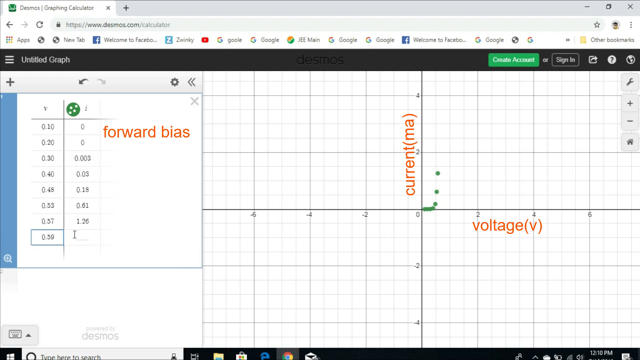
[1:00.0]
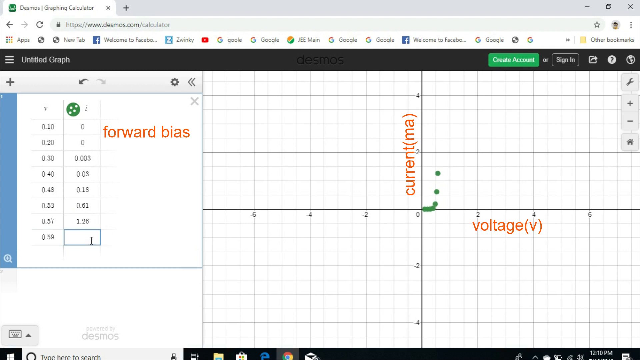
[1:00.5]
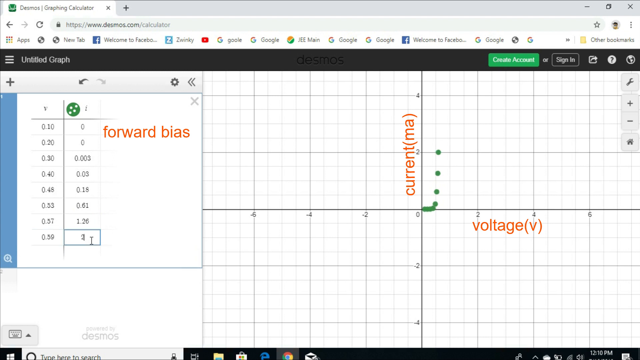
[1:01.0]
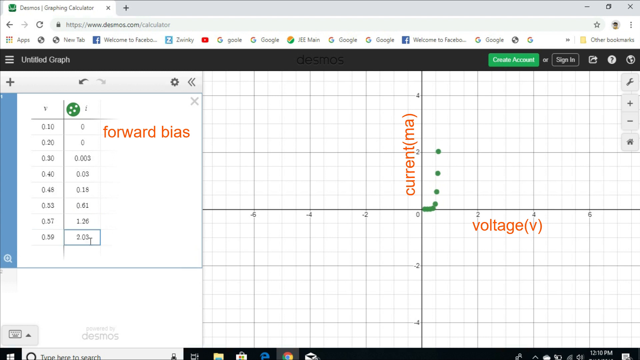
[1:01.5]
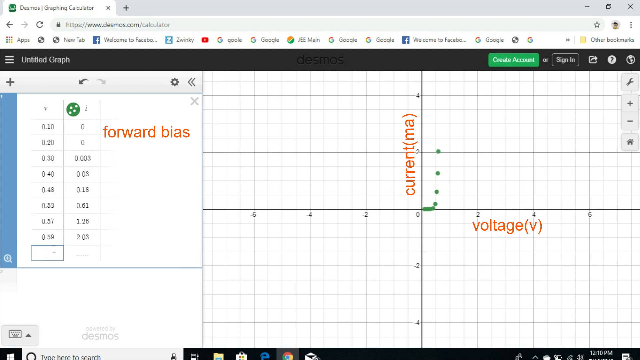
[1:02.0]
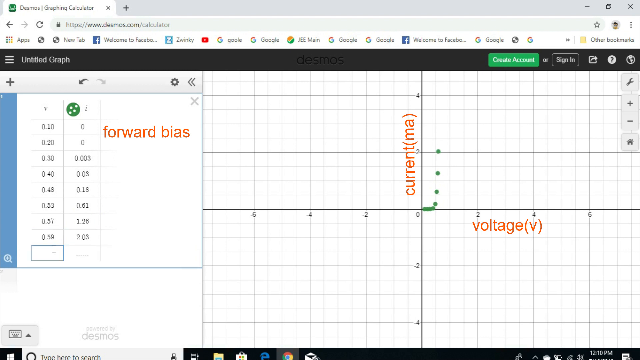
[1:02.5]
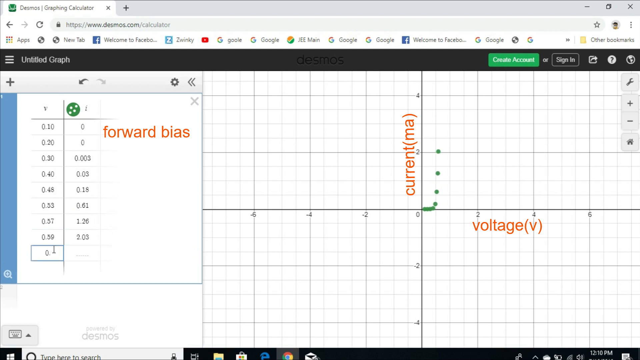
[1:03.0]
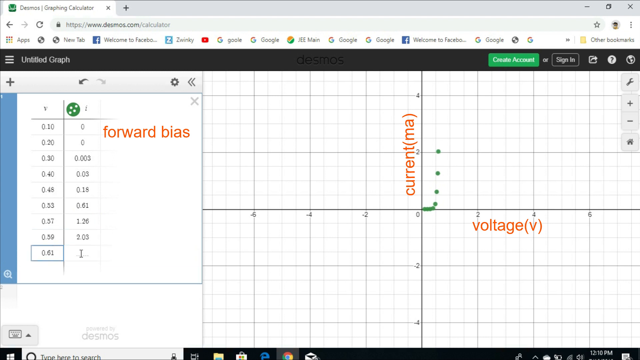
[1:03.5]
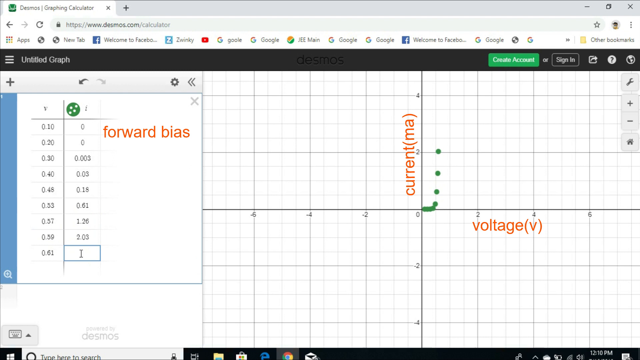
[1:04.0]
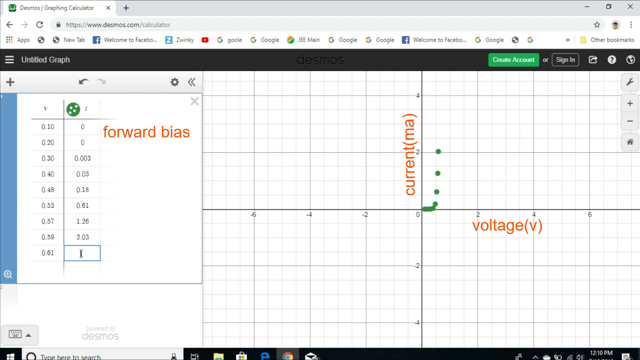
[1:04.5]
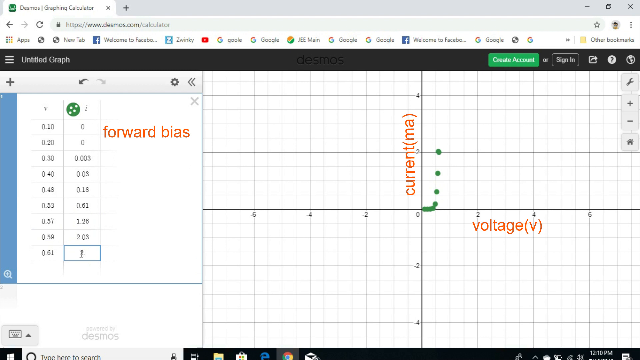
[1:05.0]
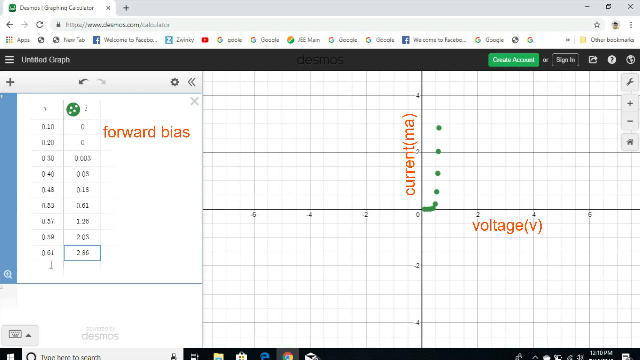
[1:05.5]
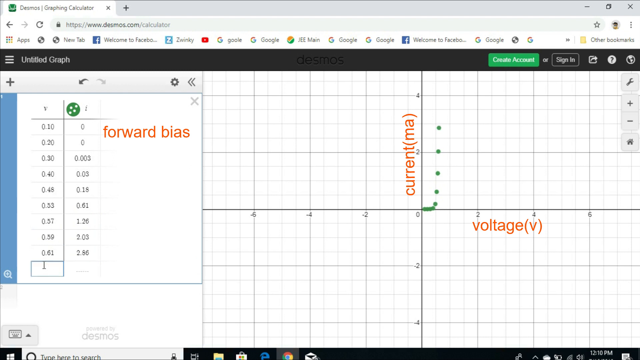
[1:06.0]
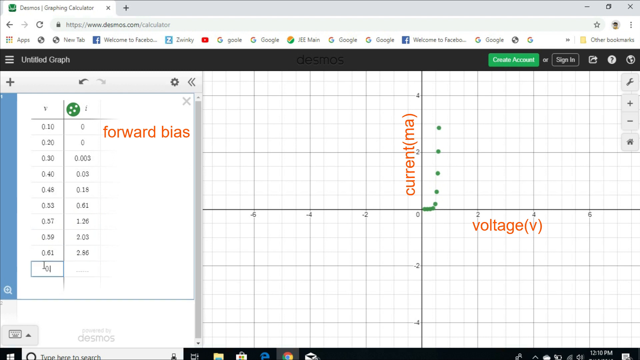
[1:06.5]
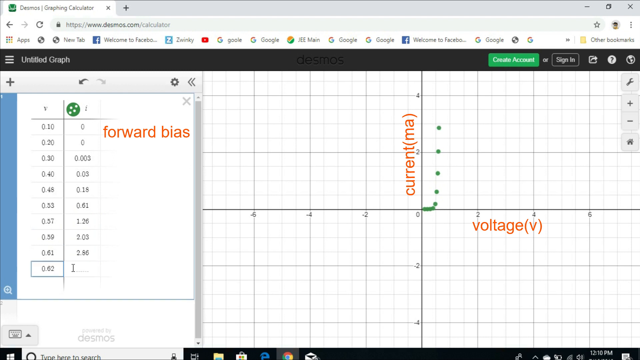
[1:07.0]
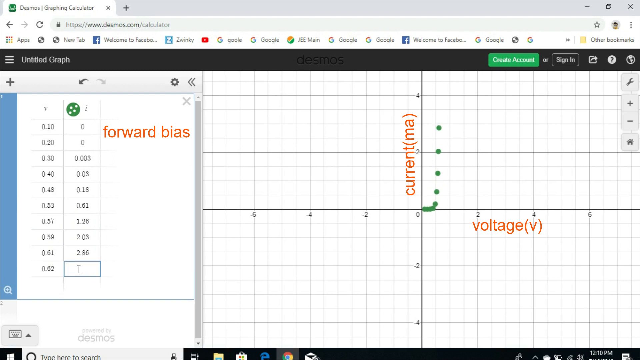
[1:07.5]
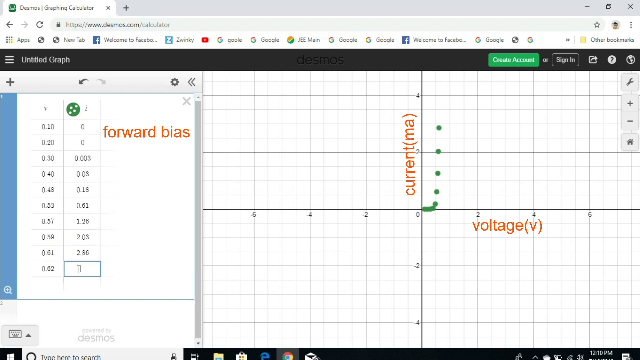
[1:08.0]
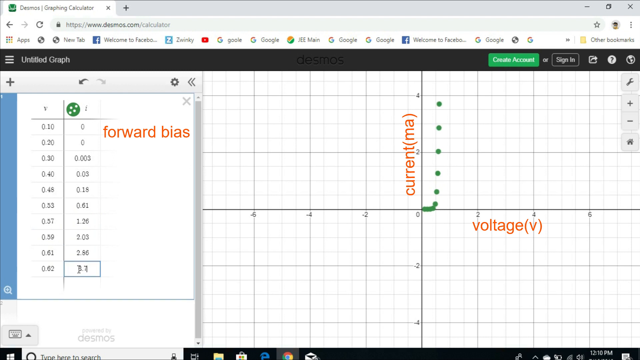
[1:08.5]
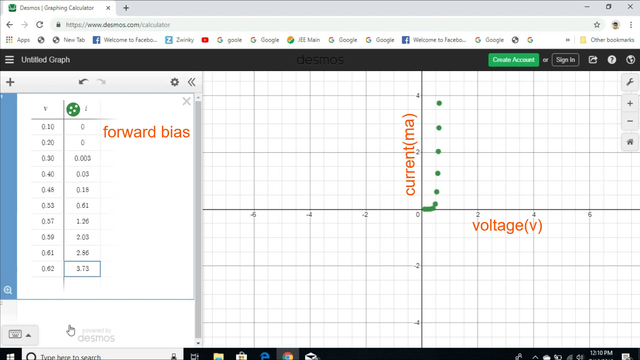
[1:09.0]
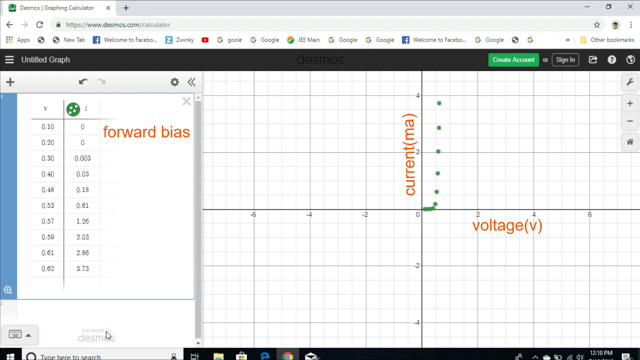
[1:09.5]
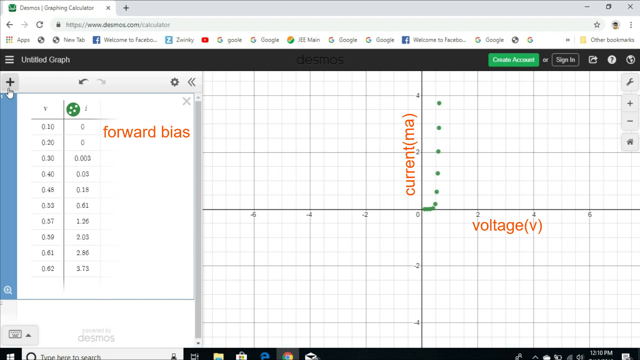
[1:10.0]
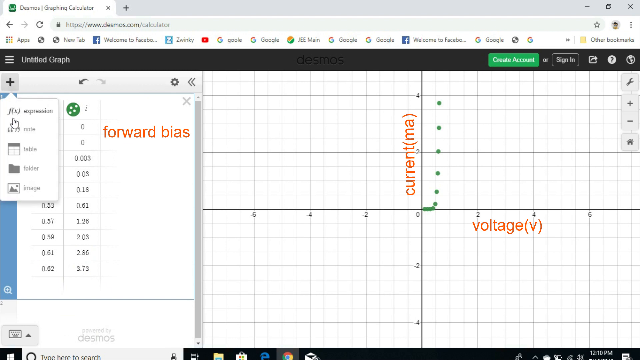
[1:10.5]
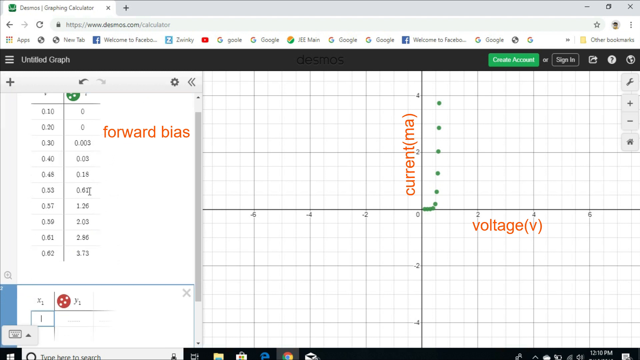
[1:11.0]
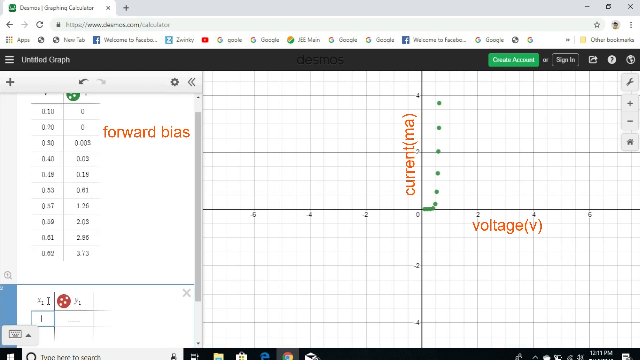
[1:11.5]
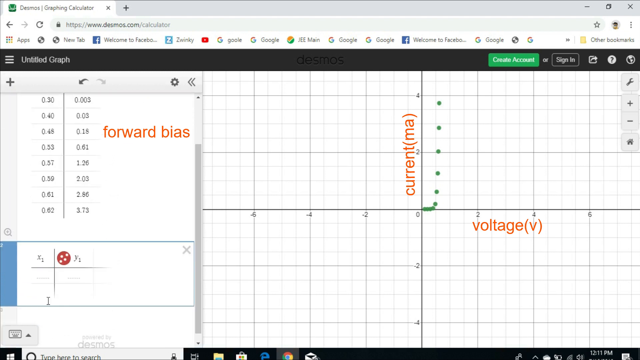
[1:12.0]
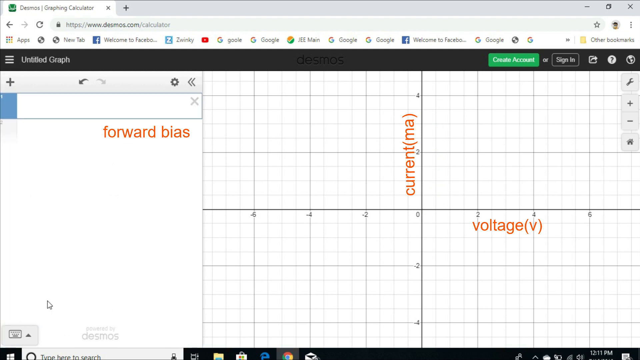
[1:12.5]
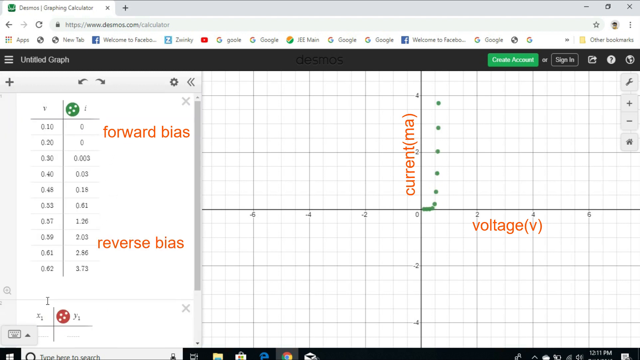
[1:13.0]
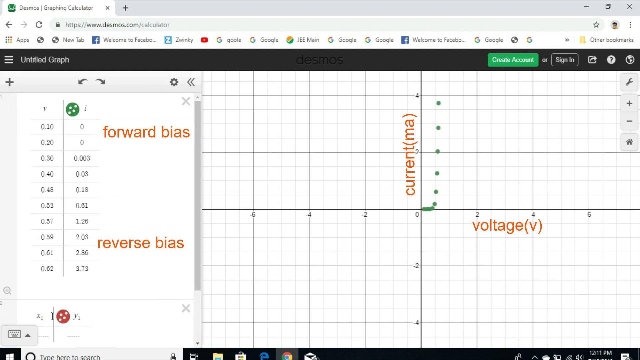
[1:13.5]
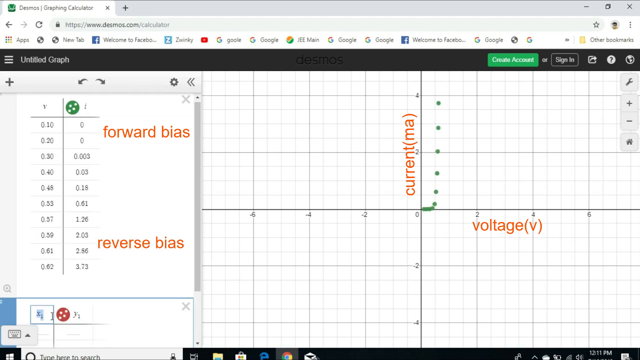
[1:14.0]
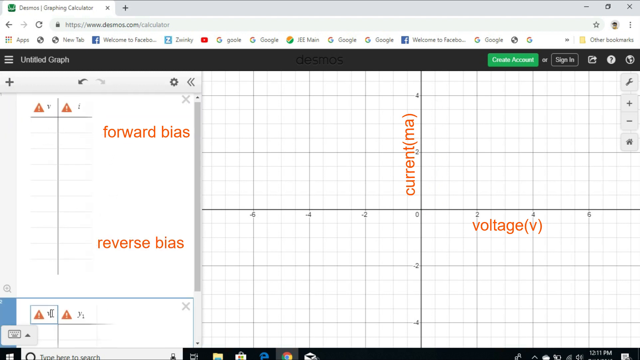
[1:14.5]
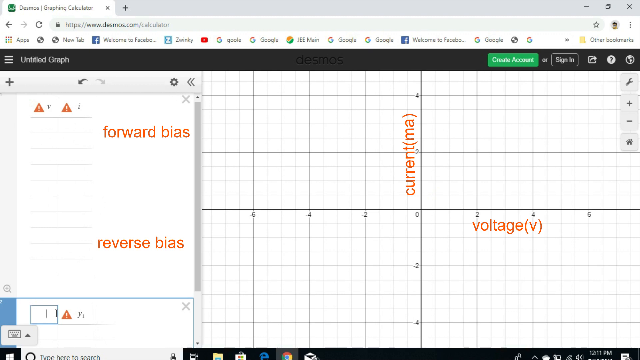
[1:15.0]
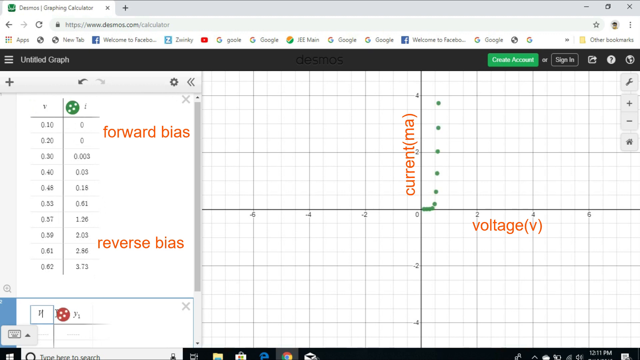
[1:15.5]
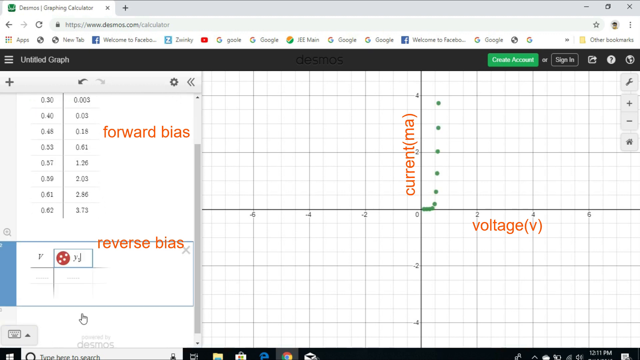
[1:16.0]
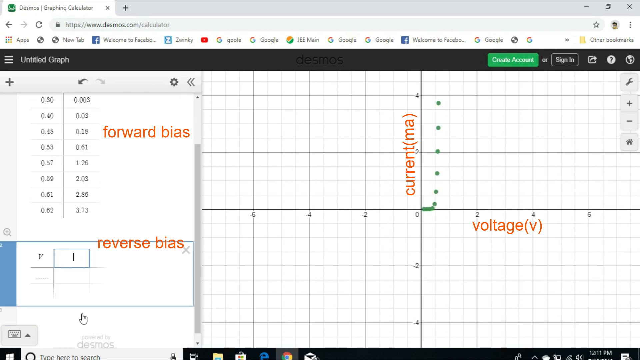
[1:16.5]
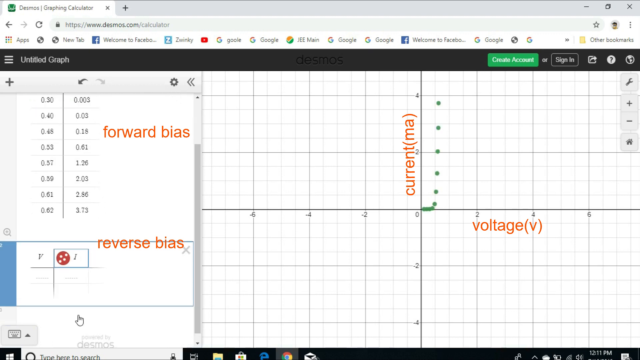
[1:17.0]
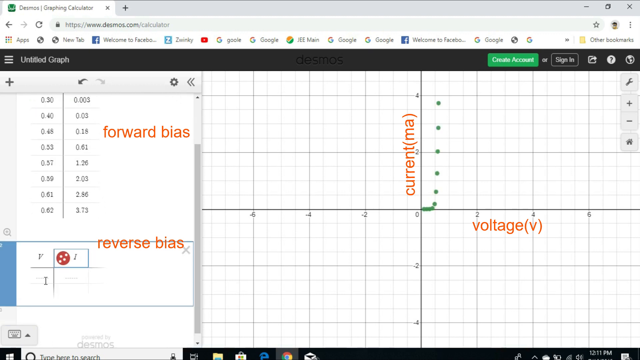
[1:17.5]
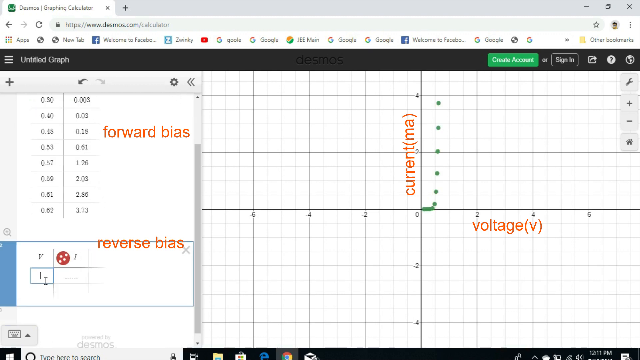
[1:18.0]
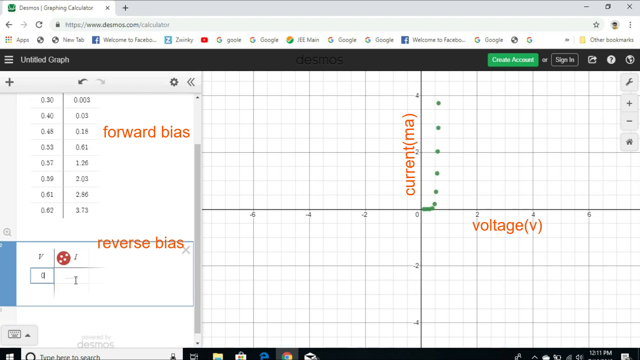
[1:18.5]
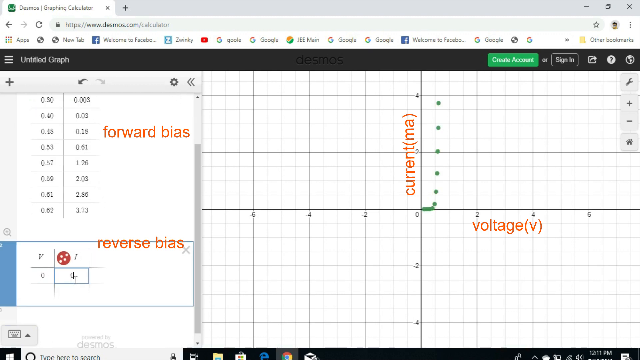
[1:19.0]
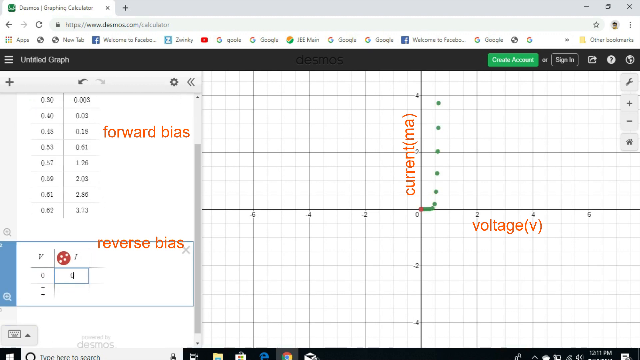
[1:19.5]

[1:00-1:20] More values are entered: 0.39 or 0.59 in the V column with 2.03 in the I column, 0.6 in V with 2.56 or 2.86 in I, and 0.62 in V with 3.73 in I. The first table's dots form a very steep curve, with the dots getting more and more spaced out. The person then goes to the top left, presses the plus button and adds a second table. The browser's bookmarks bar at the top shows Google Apps, New Tabs, Welcome to Facebook, Zwinkie, YouTube, Google, Google, JEE main, Google, Google, Welcome to Facebook, Google and other bookmarks. The orange annotations for forward bias, current and voltage remain visible throughout the whole video. Options to create an account and sign in appear at the top right of the Desmos website.